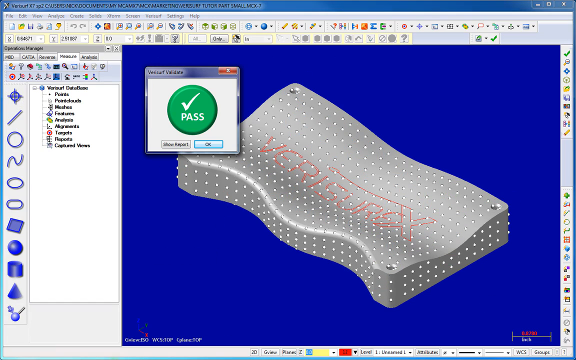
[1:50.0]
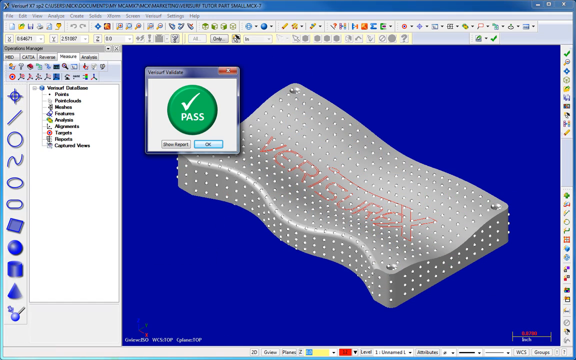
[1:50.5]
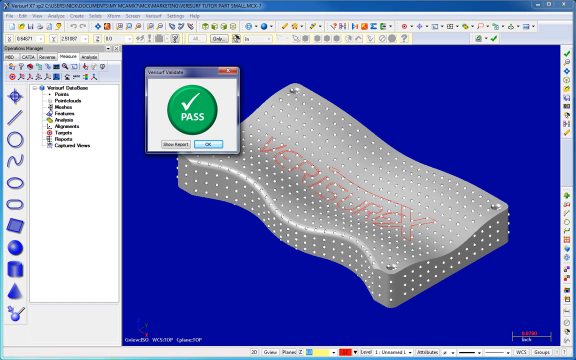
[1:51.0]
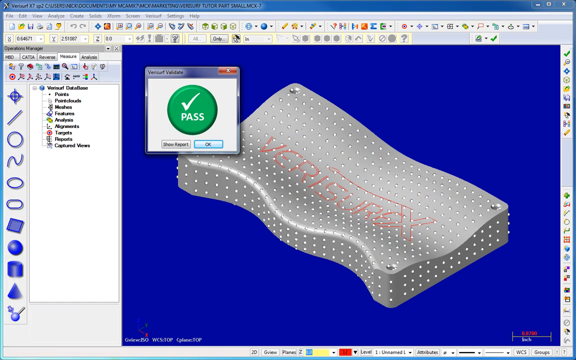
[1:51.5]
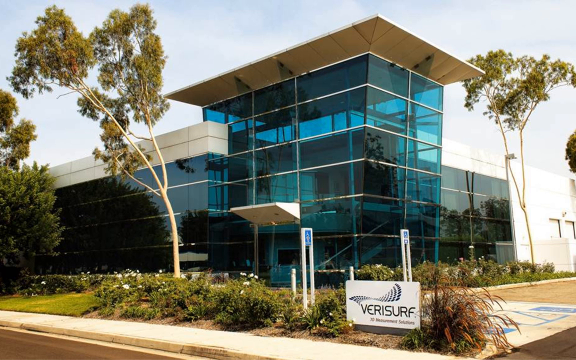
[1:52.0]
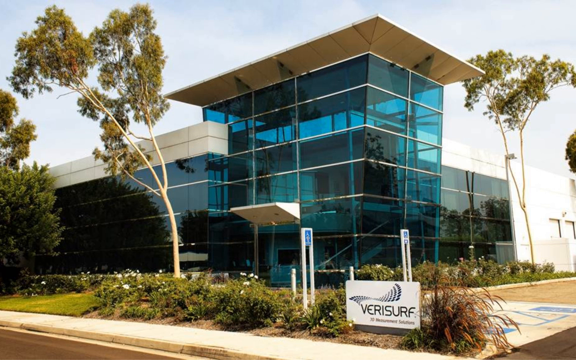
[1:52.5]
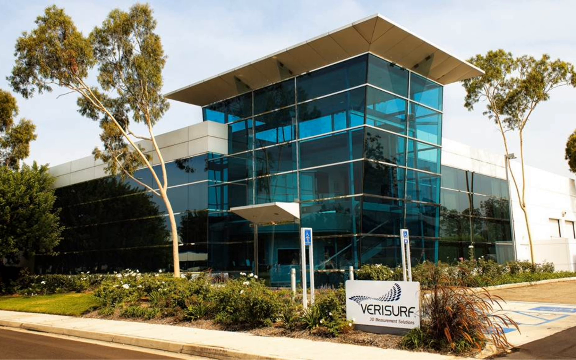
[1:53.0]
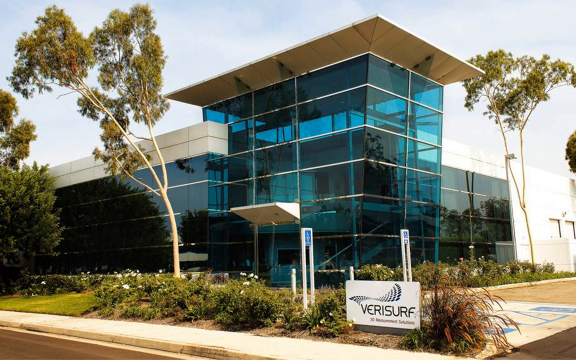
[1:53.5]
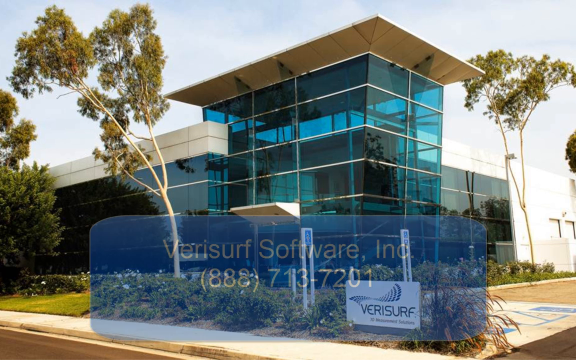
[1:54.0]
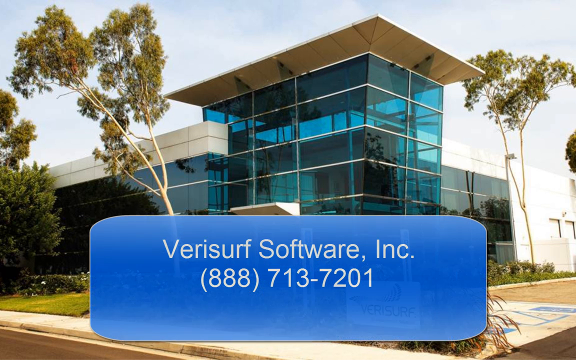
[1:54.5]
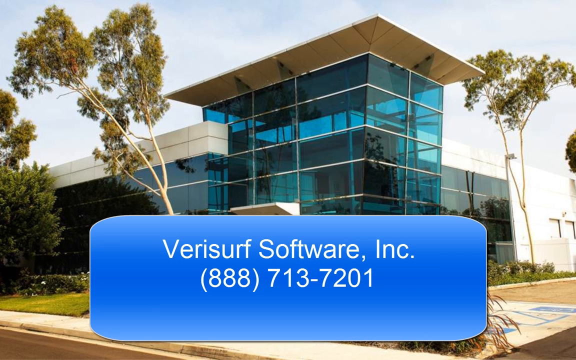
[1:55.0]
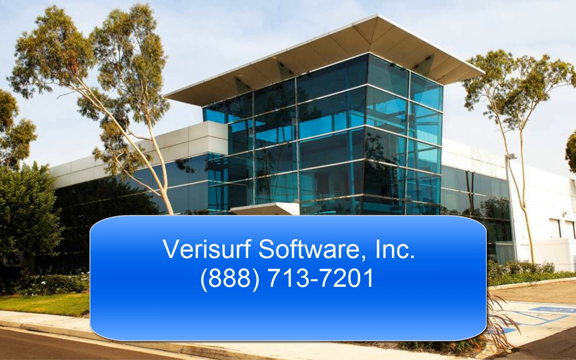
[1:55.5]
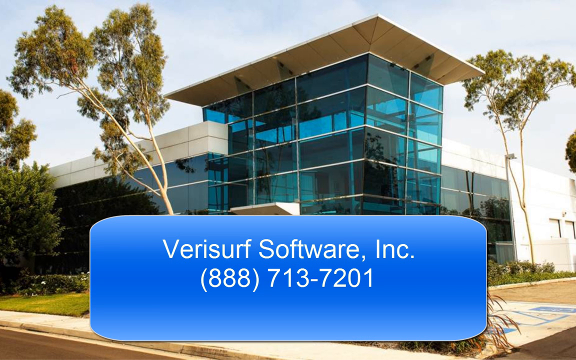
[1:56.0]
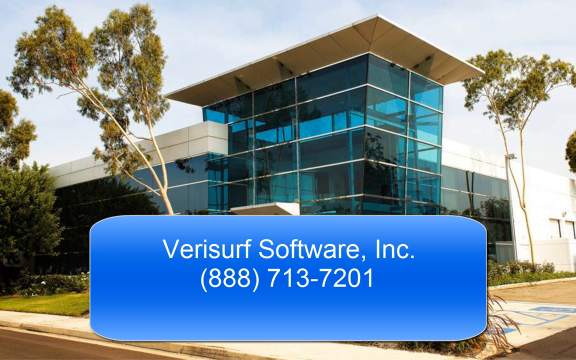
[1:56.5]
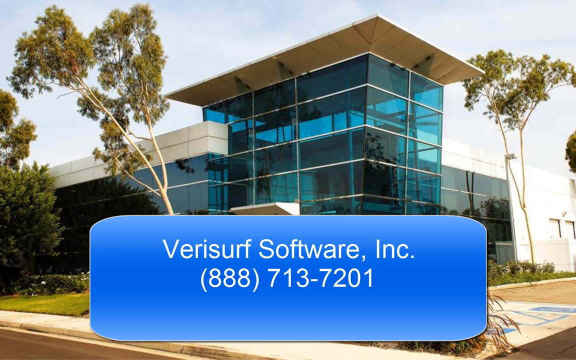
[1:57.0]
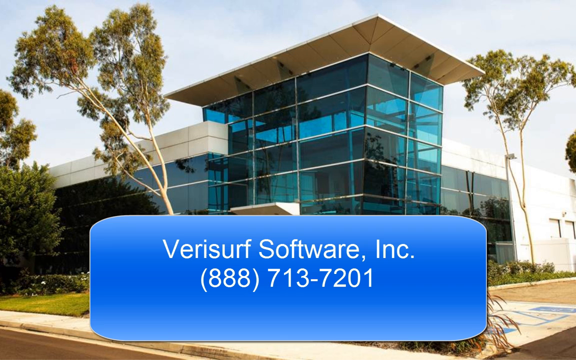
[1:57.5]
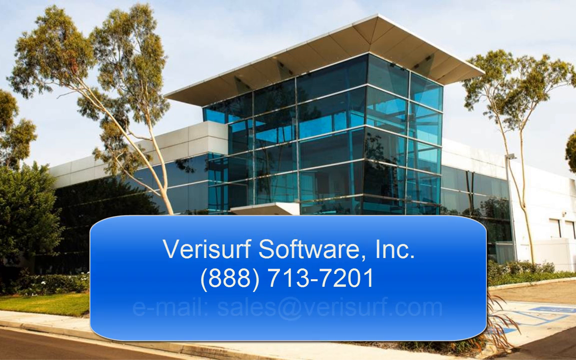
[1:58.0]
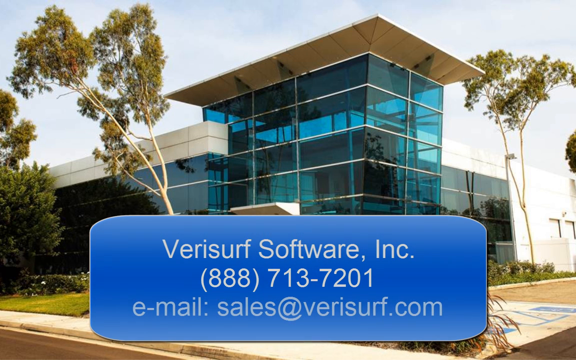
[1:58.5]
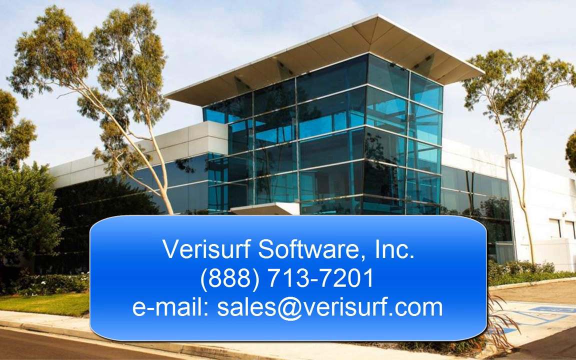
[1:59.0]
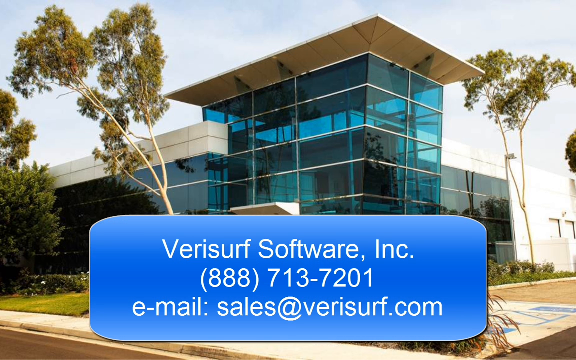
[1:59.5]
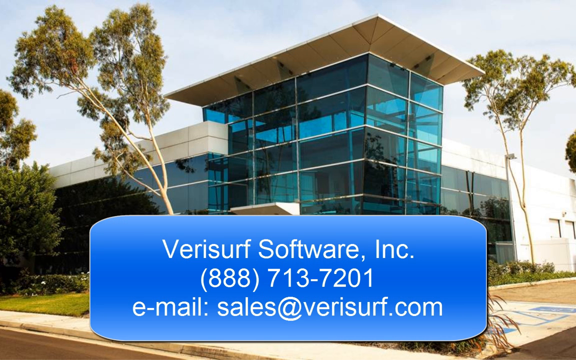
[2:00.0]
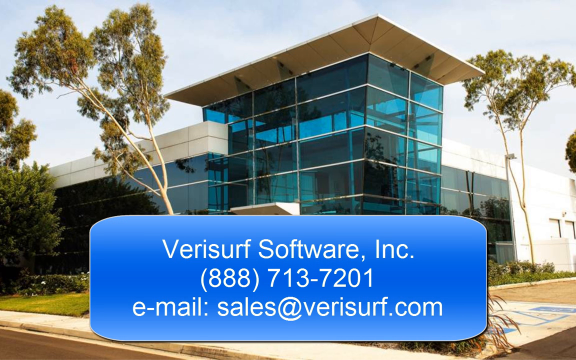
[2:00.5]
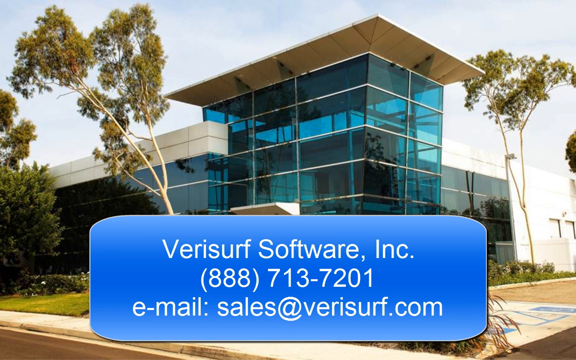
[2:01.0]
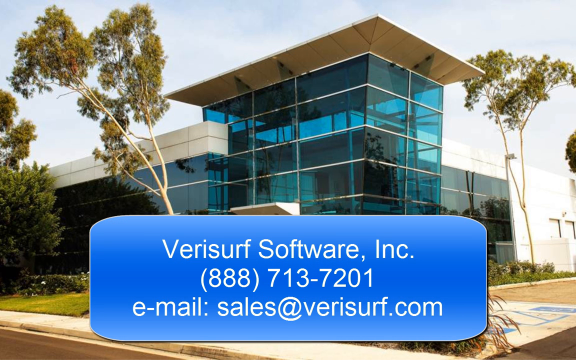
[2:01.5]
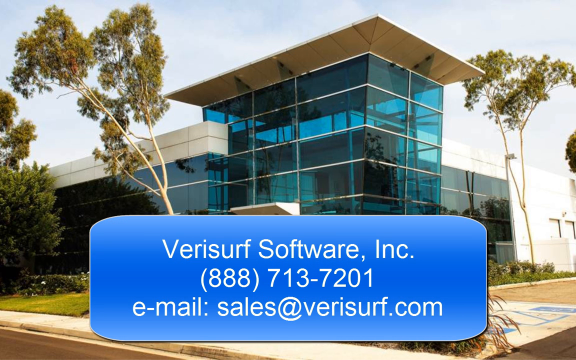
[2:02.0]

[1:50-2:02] The company name Verisurf appears on a part that was shown earlier without the name. Brief shots of the company headquarters follow, along with a contact screen showing an 888 number for reaching representatives, with the company headquarters in the background.